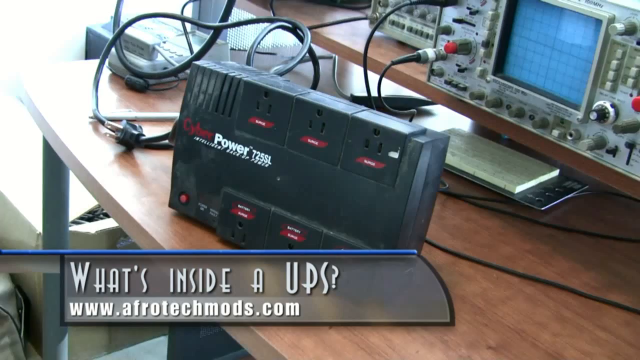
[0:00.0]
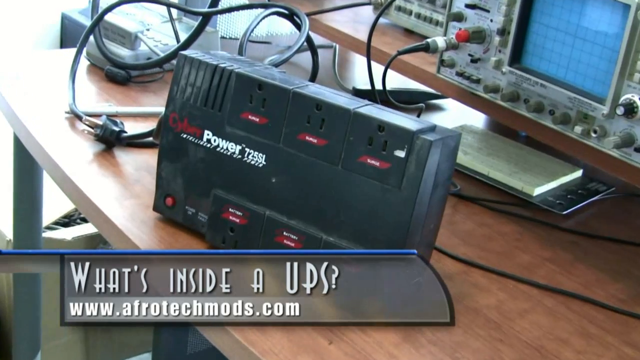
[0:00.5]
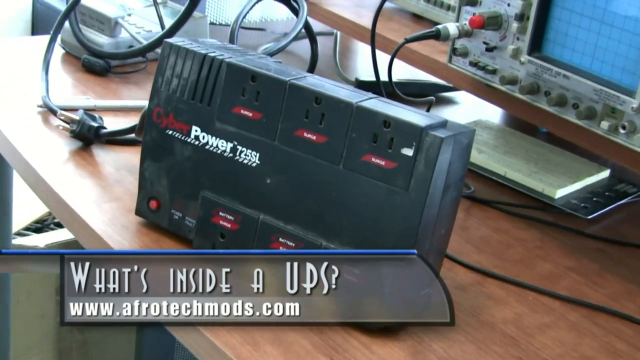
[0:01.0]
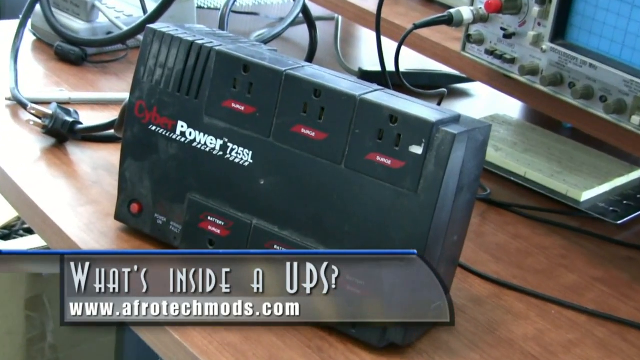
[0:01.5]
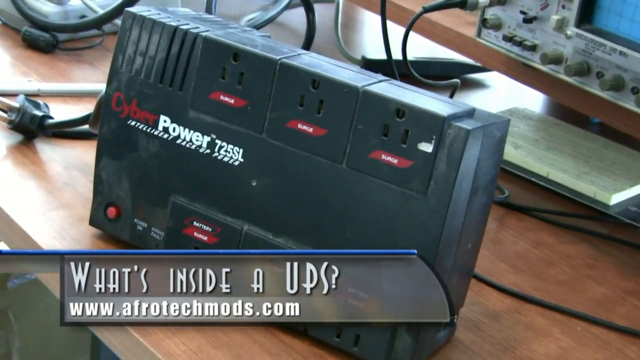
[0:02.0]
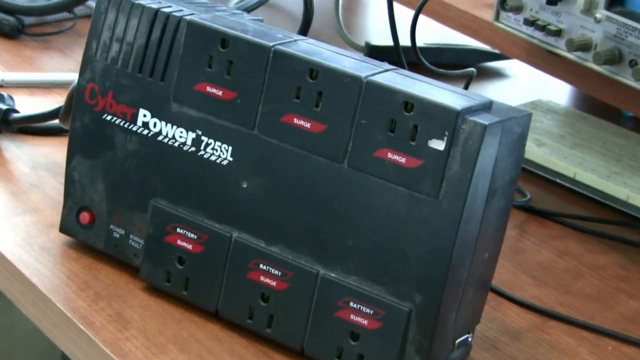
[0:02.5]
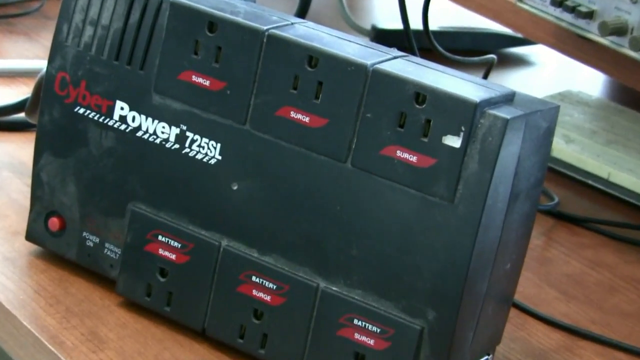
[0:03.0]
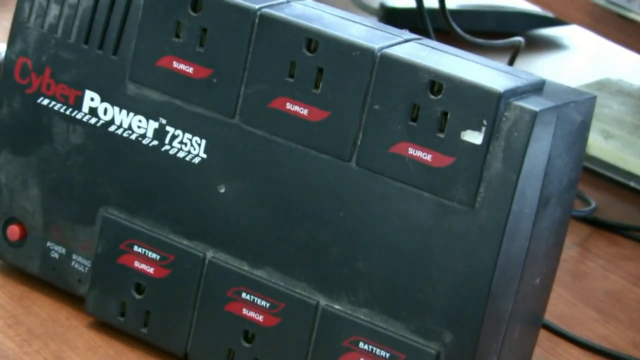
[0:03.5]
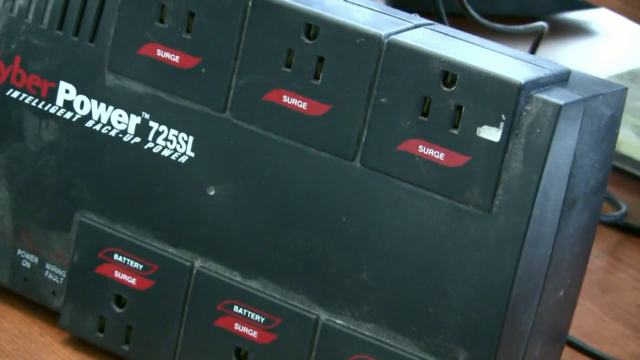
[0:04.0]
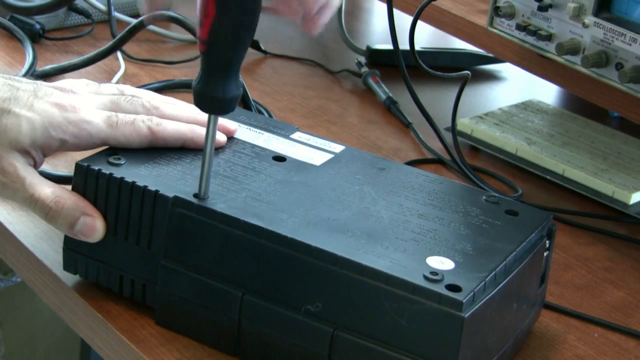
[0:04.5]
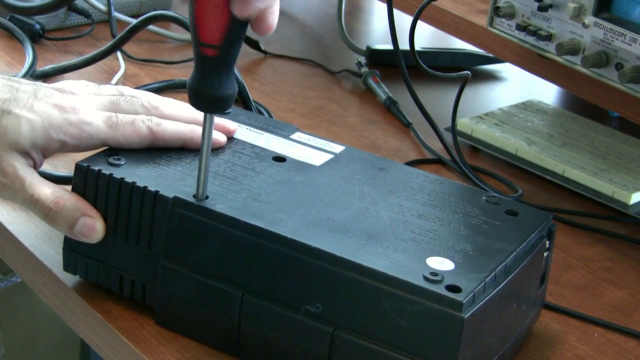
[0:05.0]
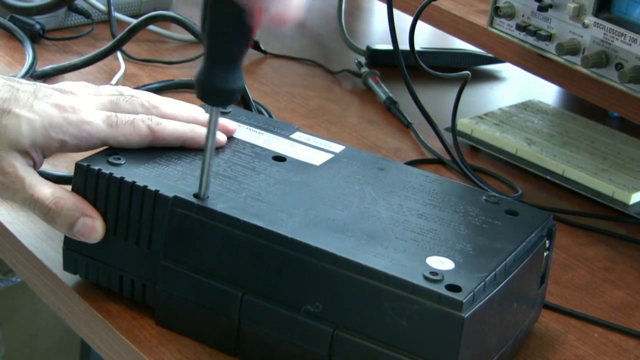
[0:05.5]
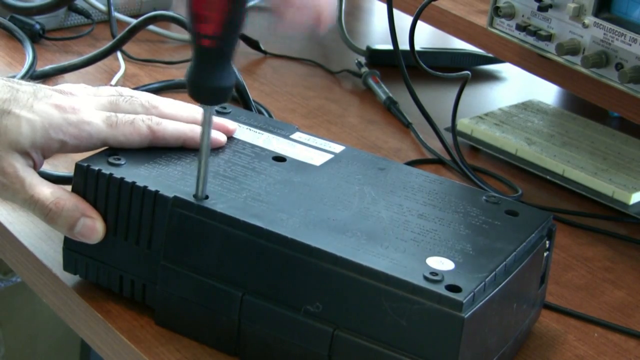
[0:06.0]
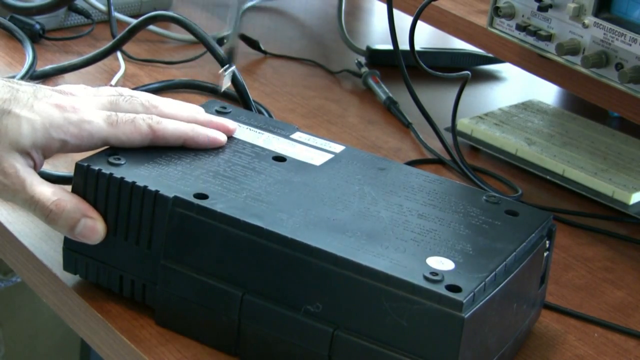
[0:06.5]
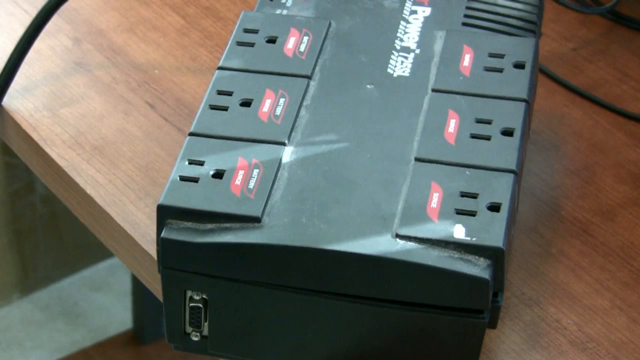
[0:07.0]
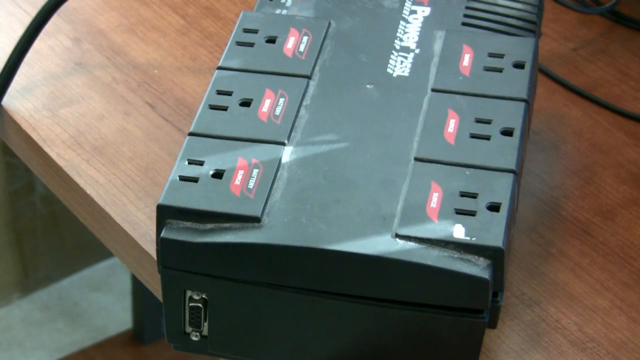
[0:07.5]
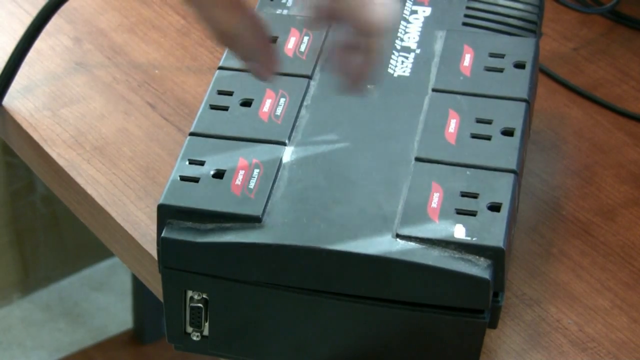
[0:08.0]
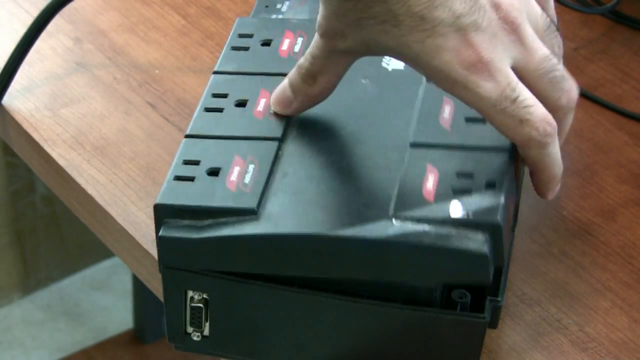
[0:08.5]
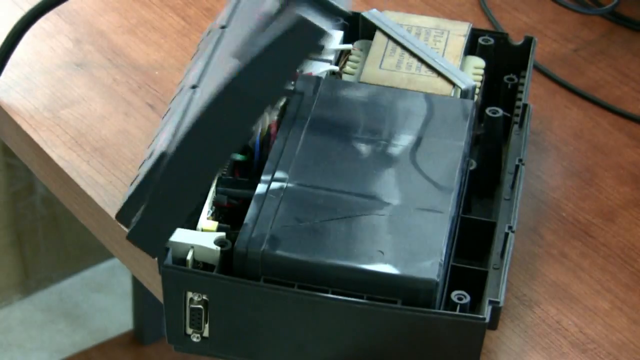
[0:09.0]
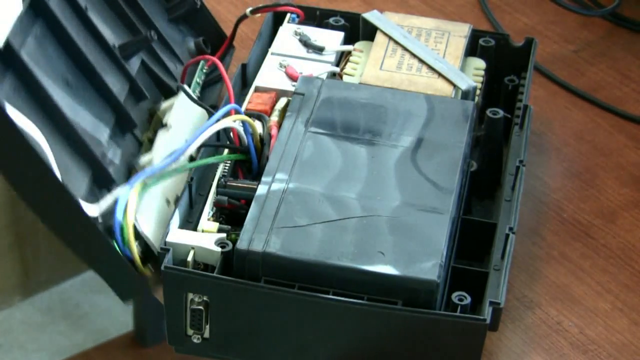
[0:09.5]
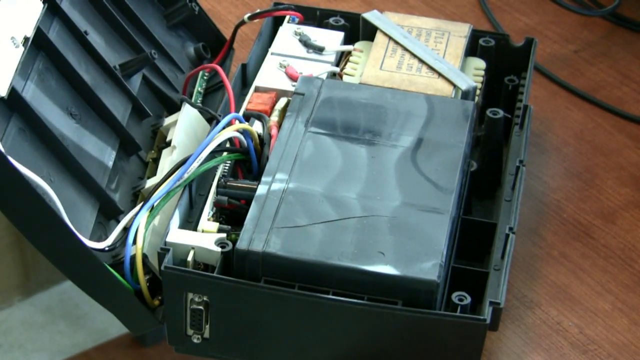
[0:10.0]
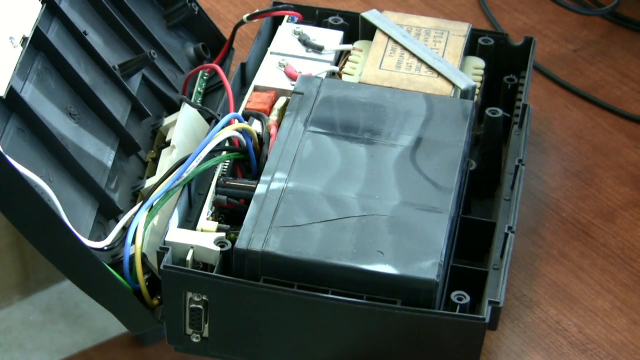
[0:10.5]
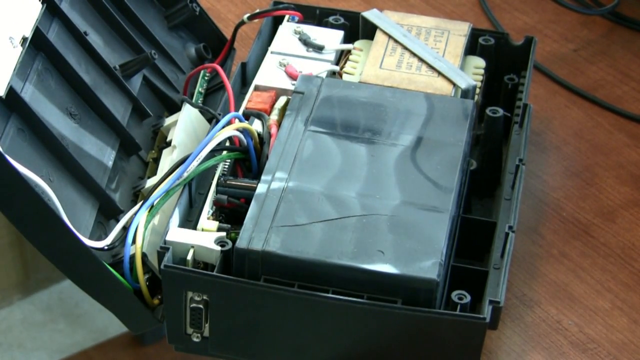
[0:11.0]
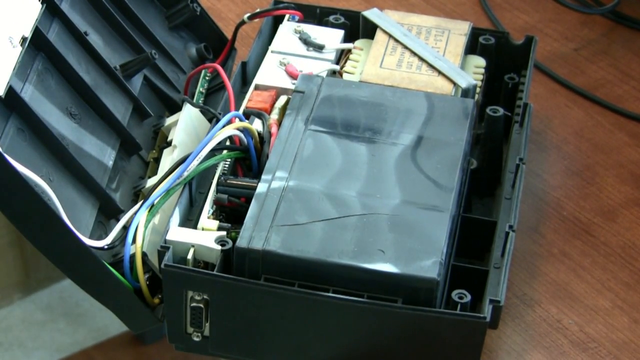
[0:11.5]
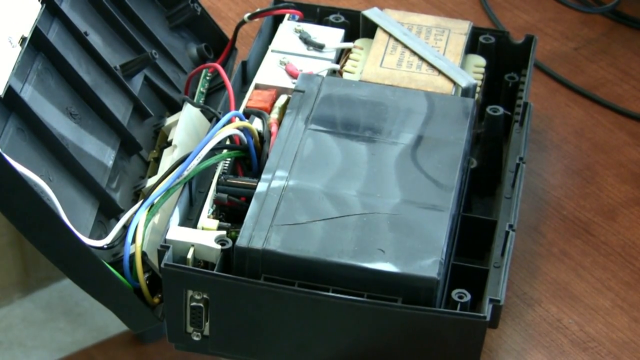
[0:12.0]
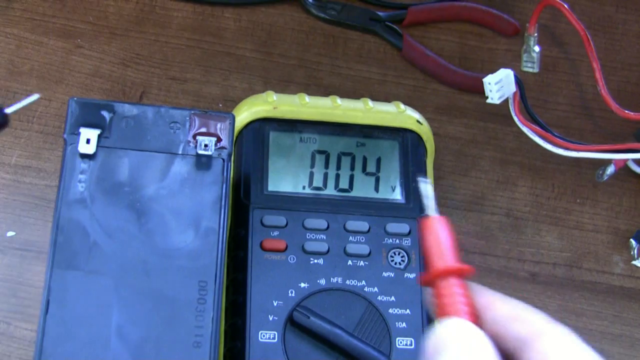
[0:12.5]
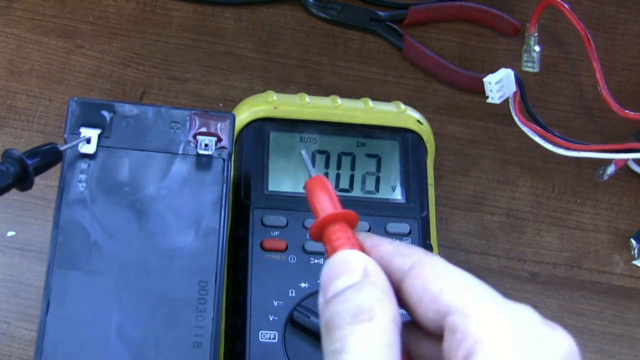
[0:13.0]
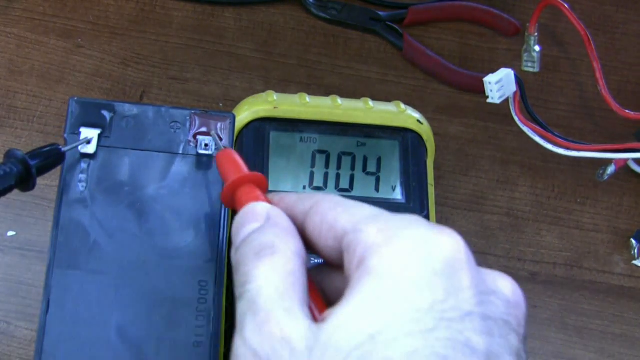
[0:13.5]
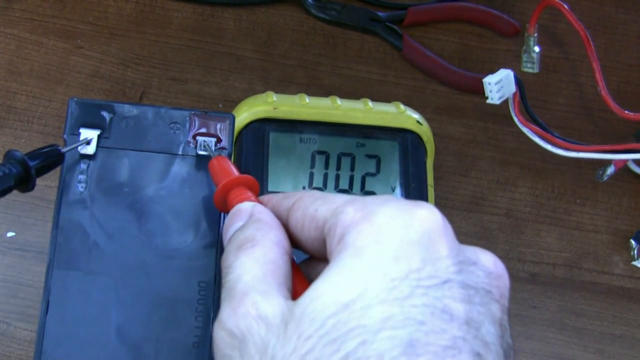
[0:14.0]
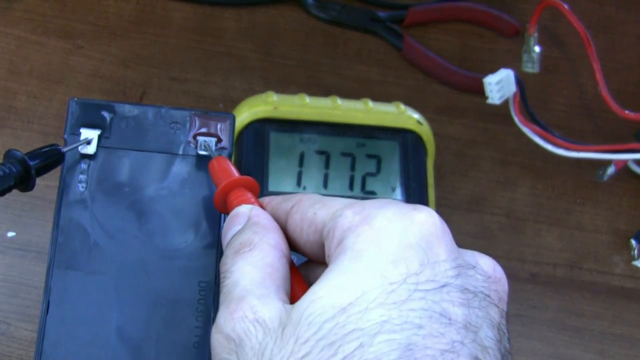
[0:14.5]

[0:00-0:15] The video, by afrotechmods.com, is about what's inside a universal power source. A gray universal power source with multiple outlets has white writing along with smaller red writing. A person unscrews the back of the power supply with a screwdriver, and cords run through the video. With the back taken off, the power supply reveals a series of smaller internal operating units with various cords. A gray and yellow volt tester is used. There is a series of wires: one red, one black, one blue, one yellow, and a white wire.